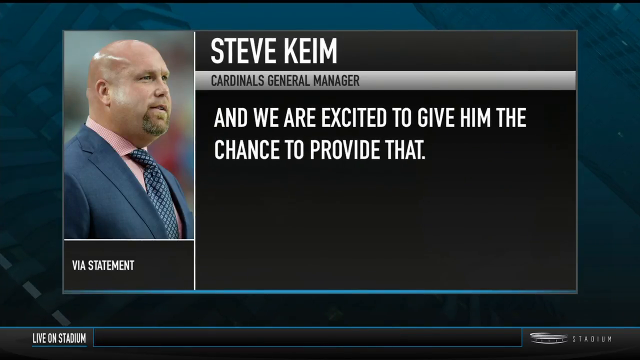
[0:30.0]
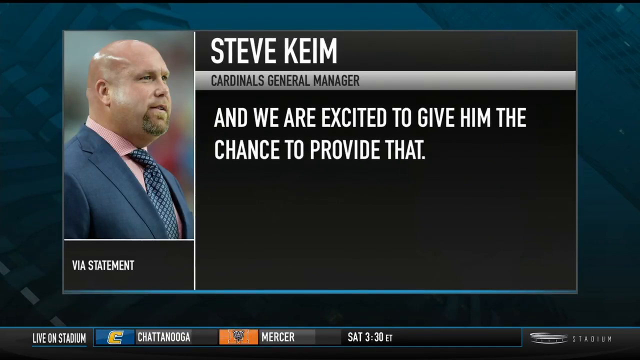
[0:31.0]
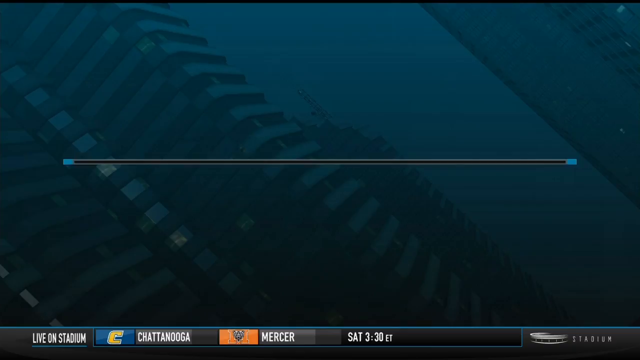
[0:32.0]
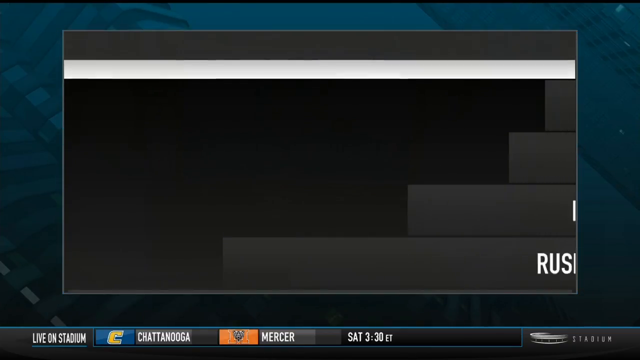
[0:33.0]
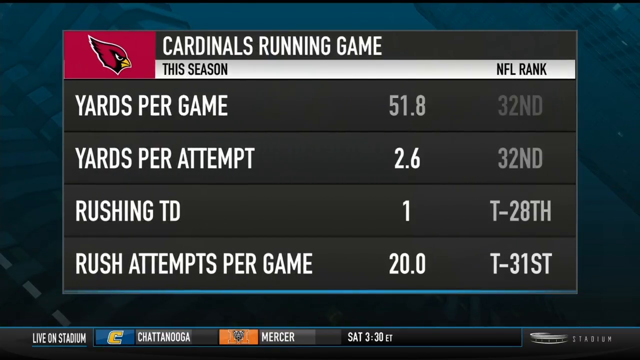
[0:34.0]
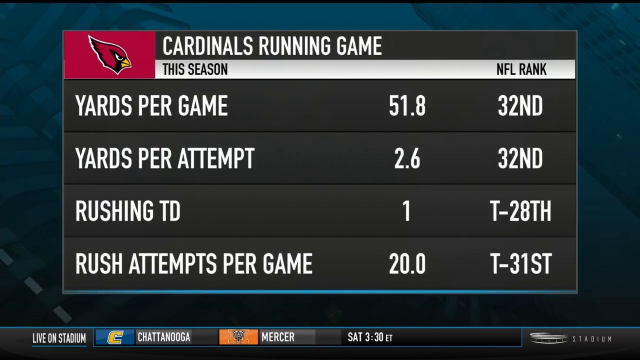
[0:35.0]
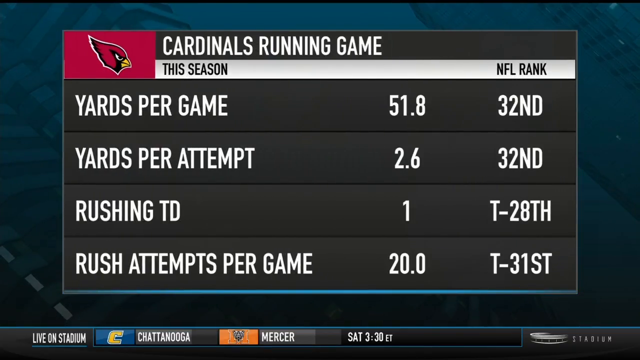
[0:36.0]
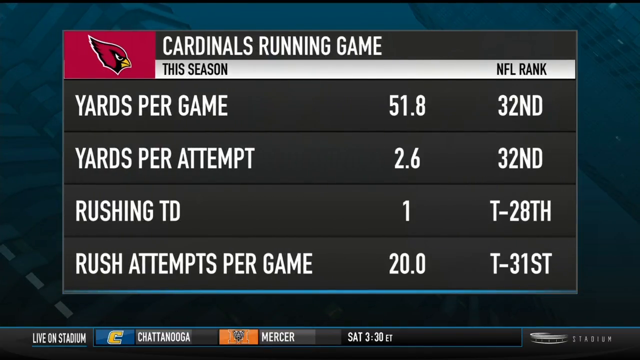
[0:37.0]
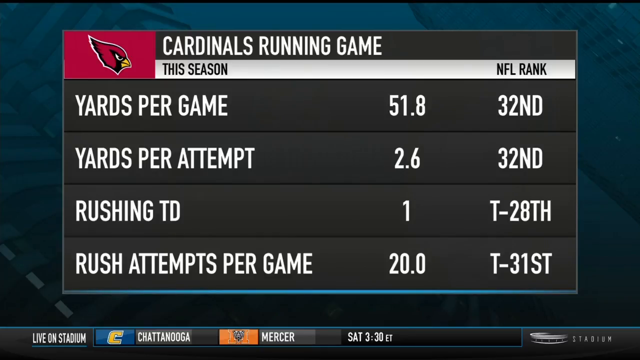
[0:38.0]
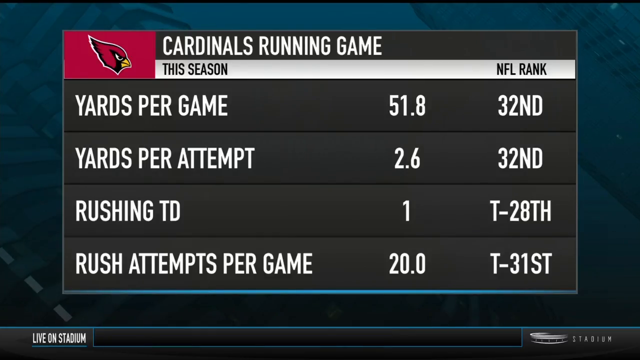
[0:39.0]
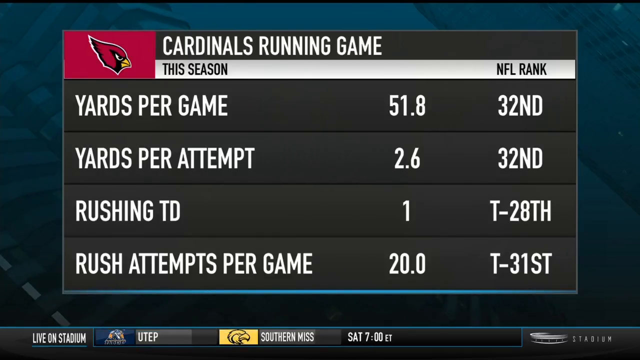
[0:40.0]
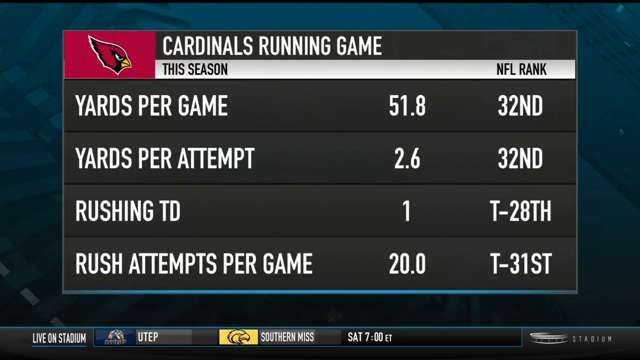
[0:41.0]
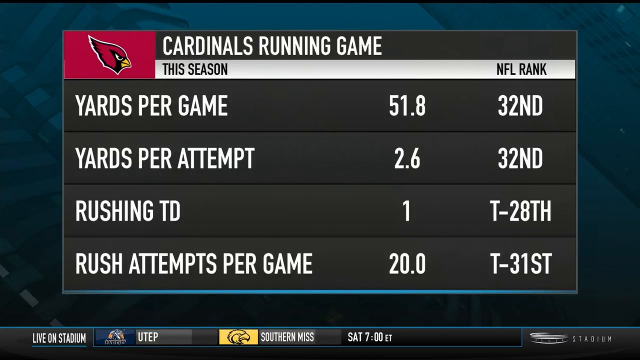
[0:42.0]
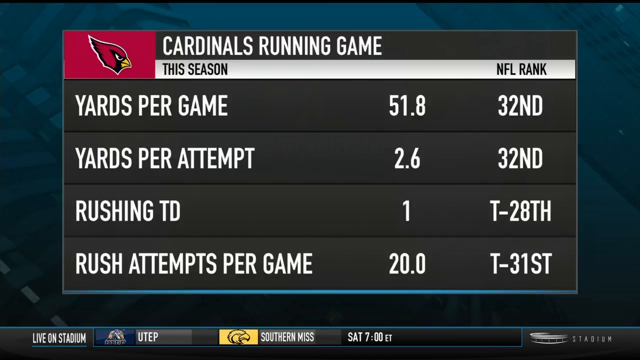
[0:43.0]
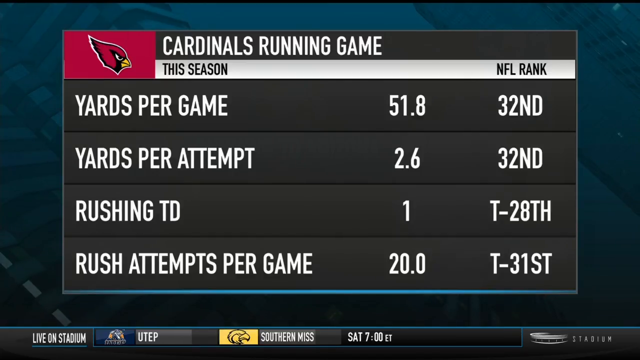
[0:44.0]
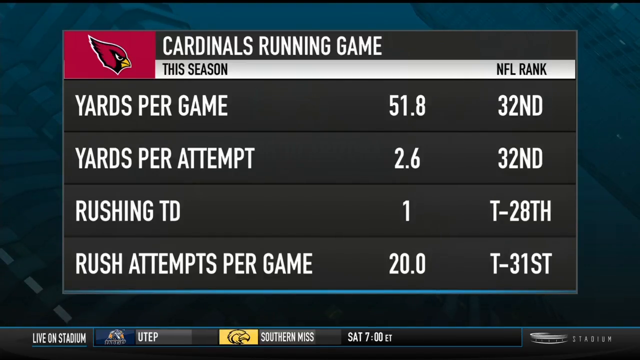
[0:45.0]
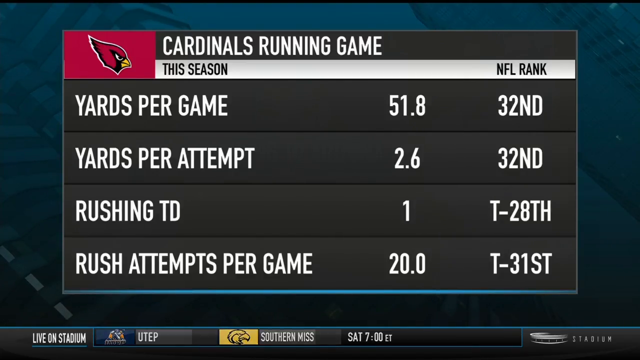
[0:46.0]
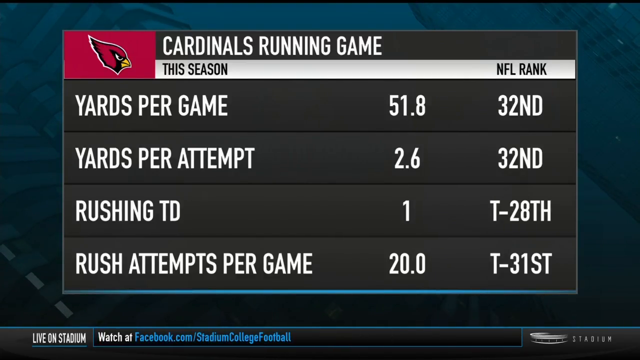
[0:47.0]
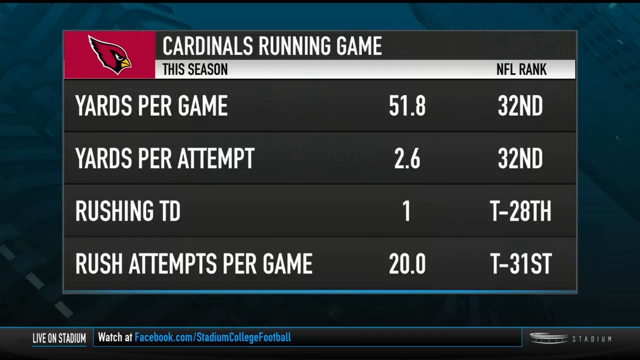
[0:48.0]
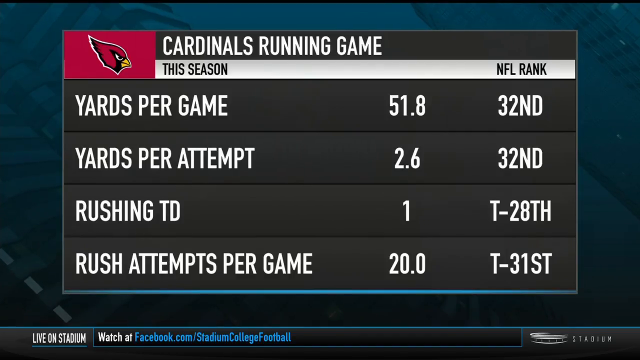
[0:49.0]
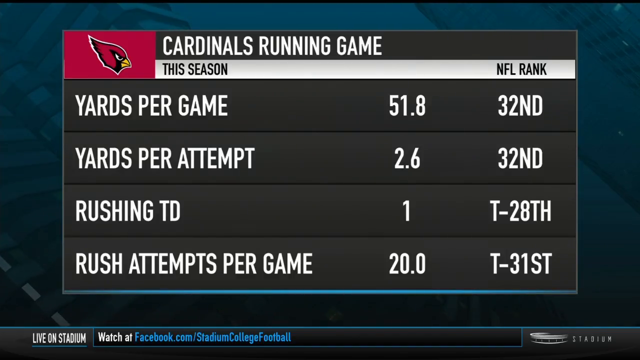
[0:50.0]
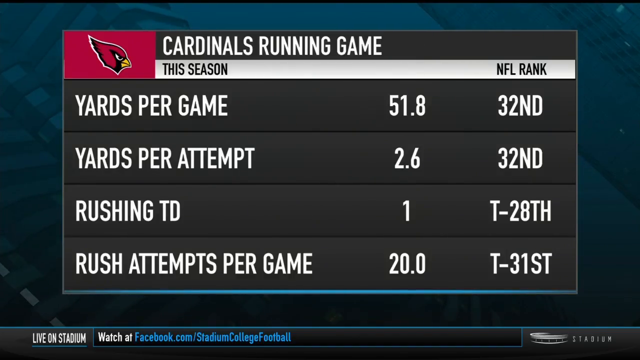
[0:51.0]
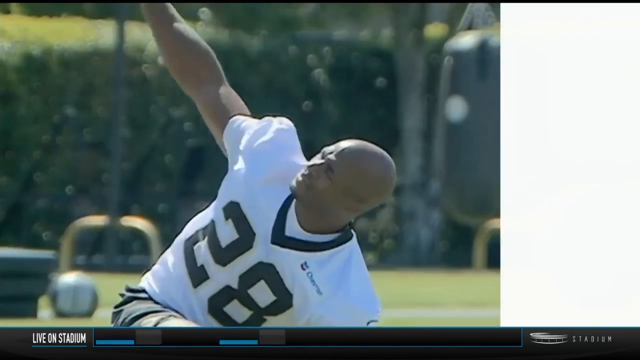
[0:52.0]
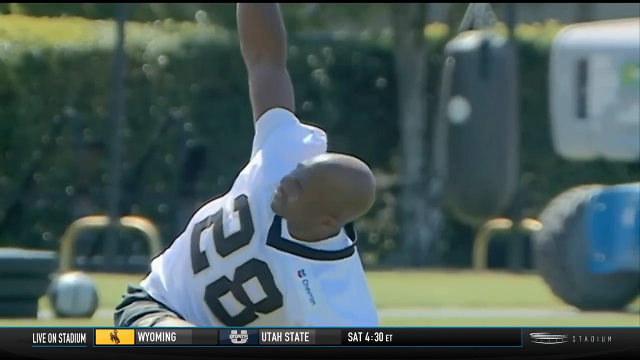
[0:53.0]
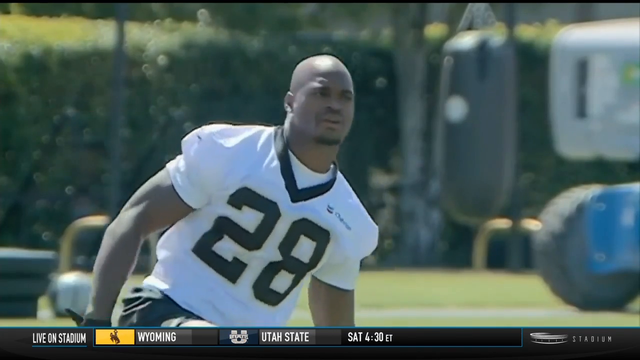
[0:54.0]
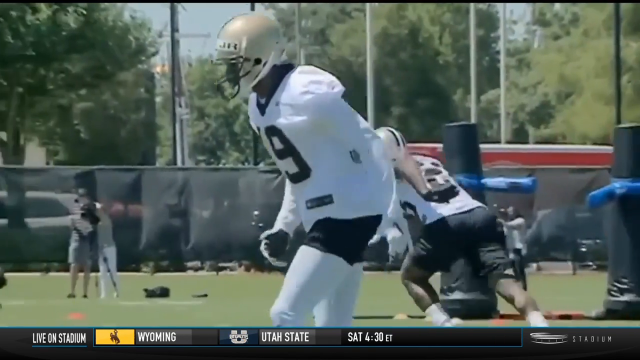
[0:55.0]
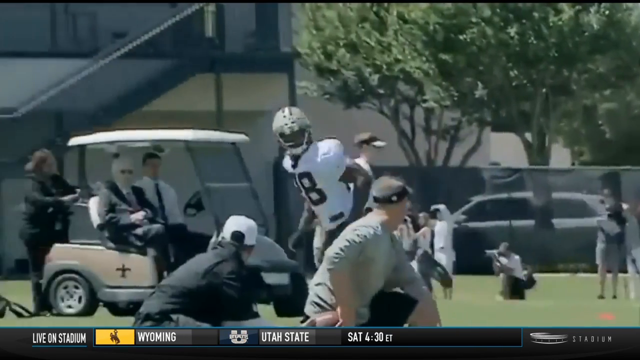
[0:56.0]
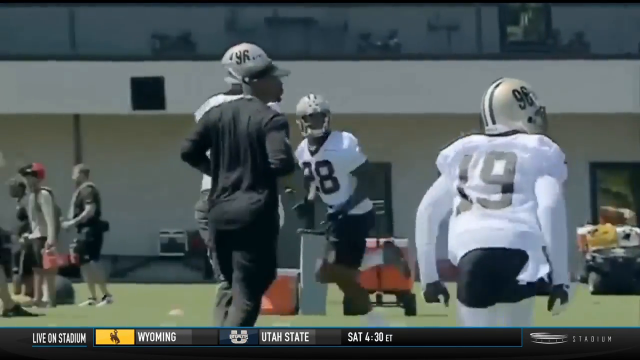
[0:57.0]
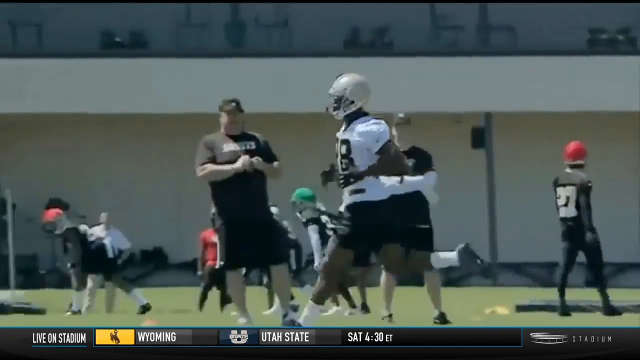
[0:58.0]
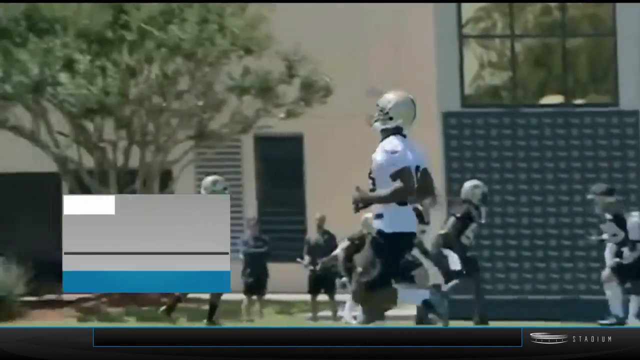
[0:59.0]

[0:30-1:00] After the quote, a statistics graphic appears. In the upper left of the text box is a red Cardinals logo on a red background, with "Cardinals running game" in white all caps to its right. Beneath, a white banner reads "this season" in black, with "NFL rank" to the right. Four rows follow on a black background: "yards per game," "yards per attempt," "rushing TD" and "rush attempts per game," with the values 51.8, 2.6, 1 and 20.0, and under NFL rank "32nd," "32nd," "T-28" and "T-31st." Outside the black text box the background is sort of a dark teal. The stats stay on screen for a while. The video then switches to footage of a bald Black man stretching, wearing a white football jersey with the number 28 in black but not full pads. He stretches his right hand up to the sky and brings it back down to the center. An action shot follows in which he has a helmet on; it appears to still be practice, with a bunch of players running around, and the focus is mostly on him.